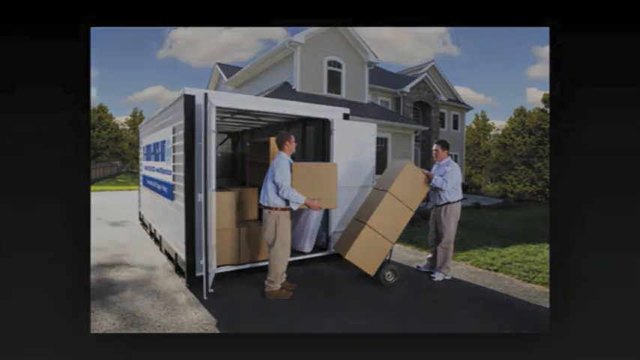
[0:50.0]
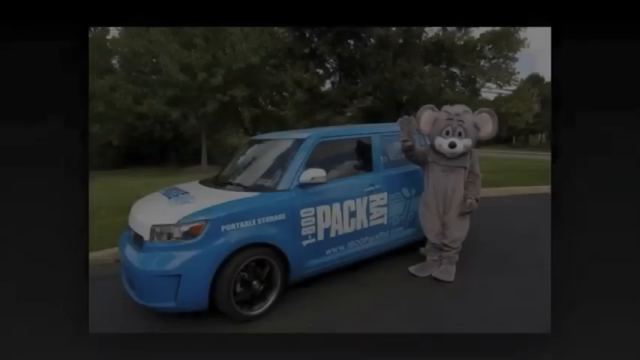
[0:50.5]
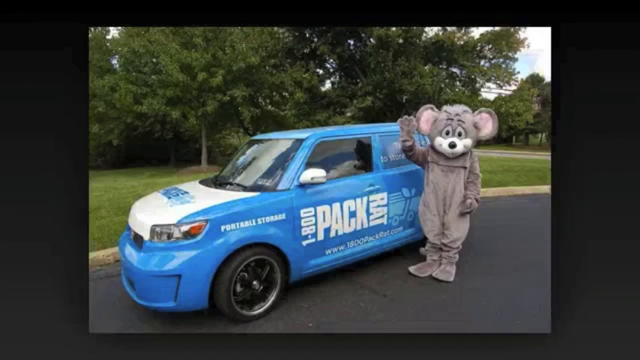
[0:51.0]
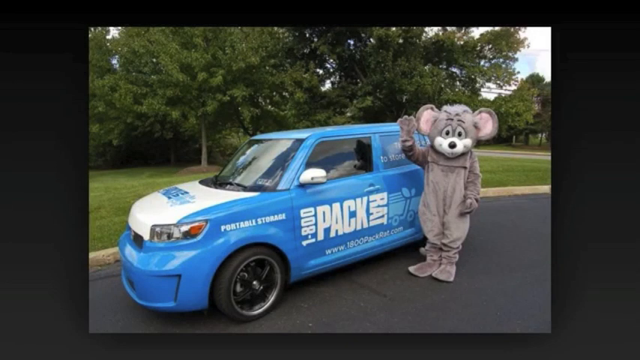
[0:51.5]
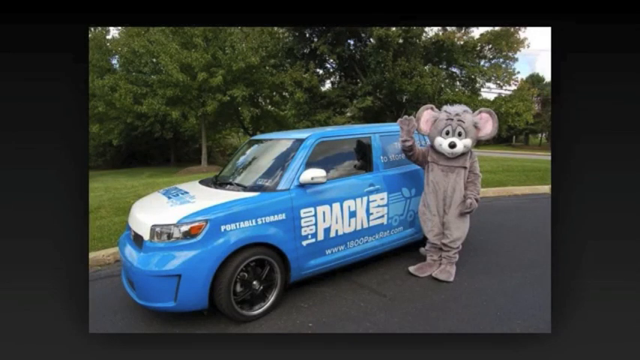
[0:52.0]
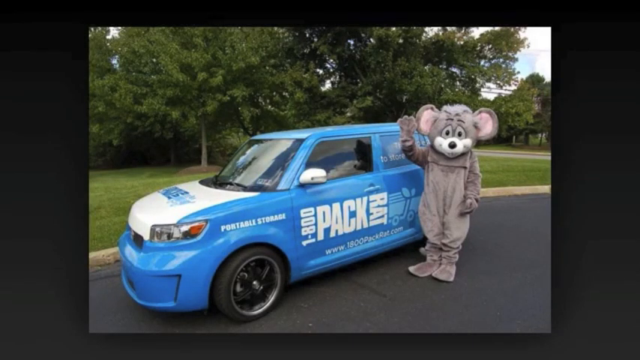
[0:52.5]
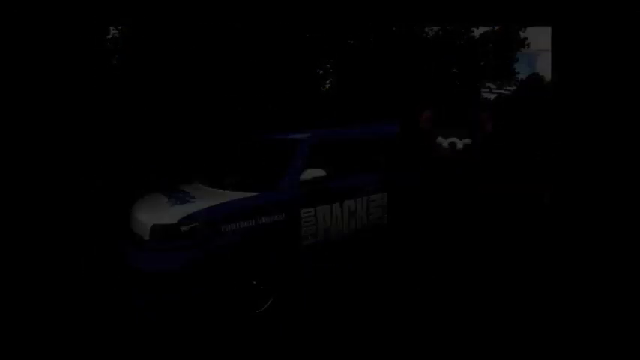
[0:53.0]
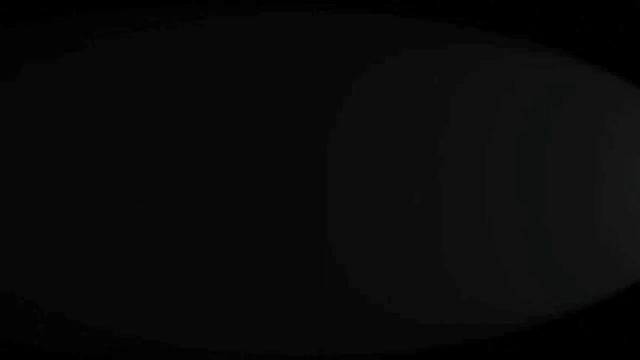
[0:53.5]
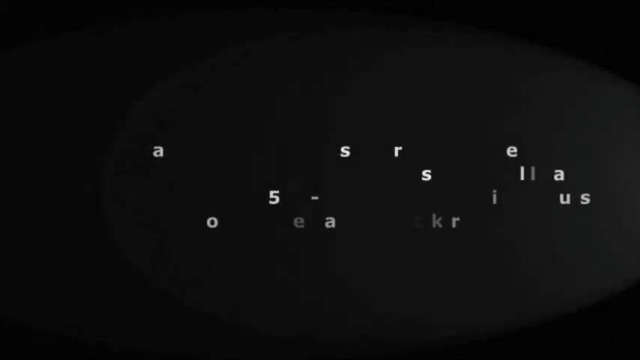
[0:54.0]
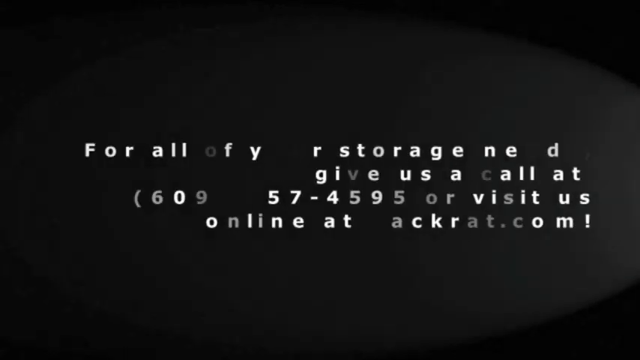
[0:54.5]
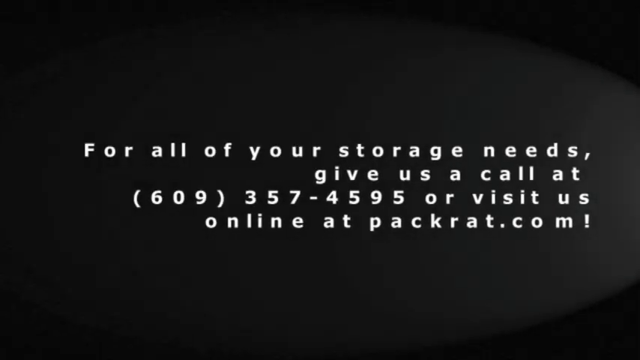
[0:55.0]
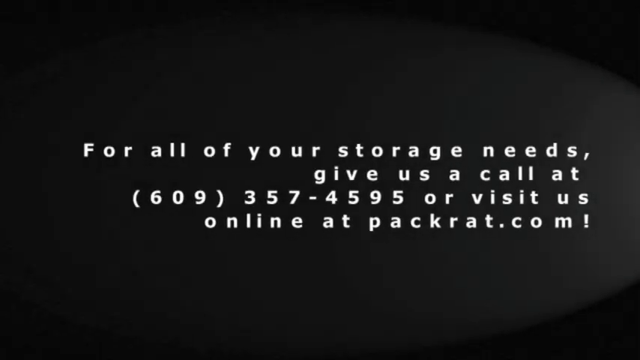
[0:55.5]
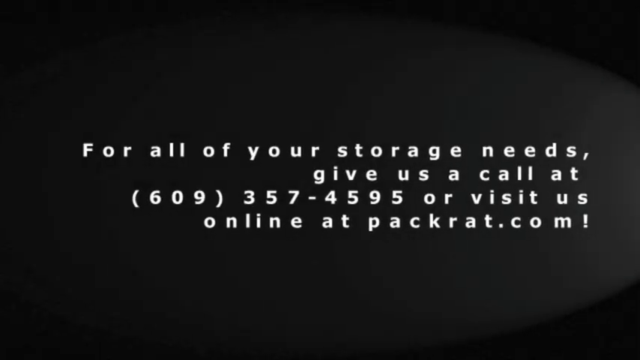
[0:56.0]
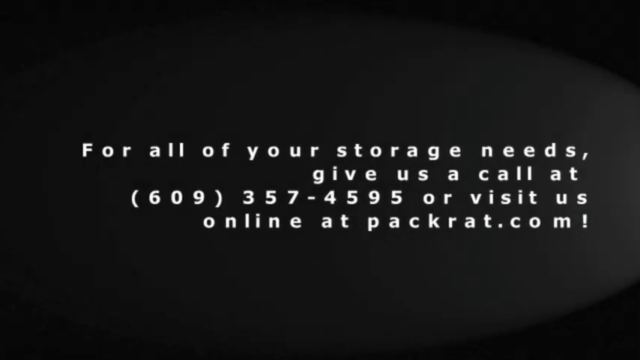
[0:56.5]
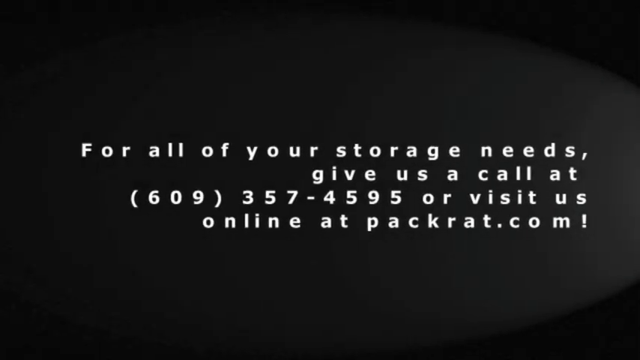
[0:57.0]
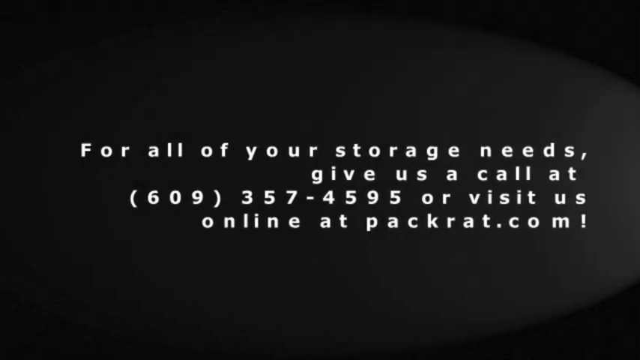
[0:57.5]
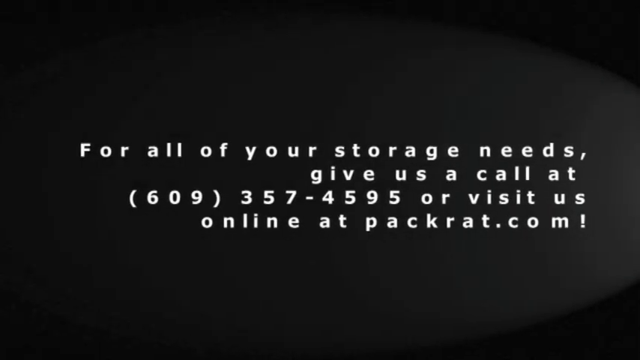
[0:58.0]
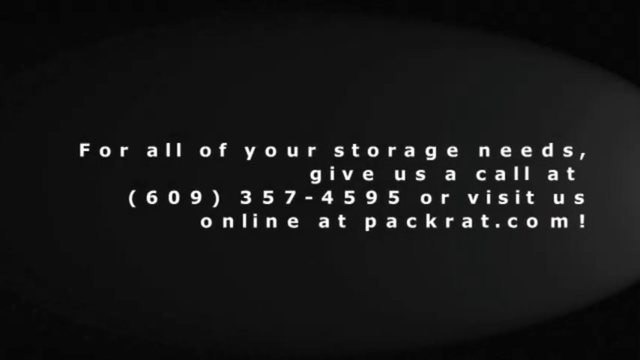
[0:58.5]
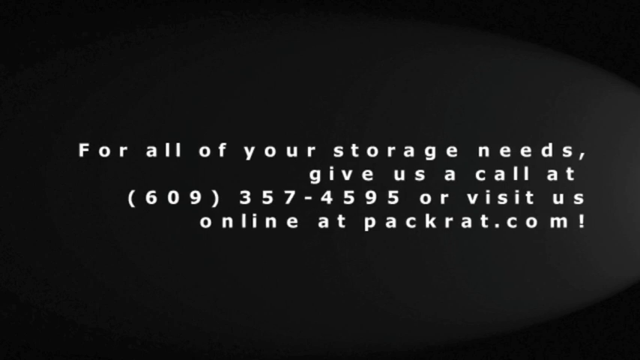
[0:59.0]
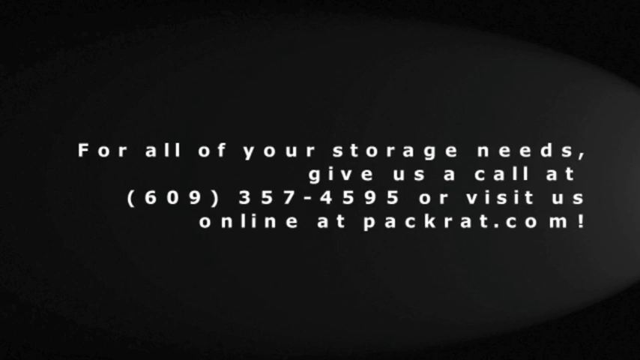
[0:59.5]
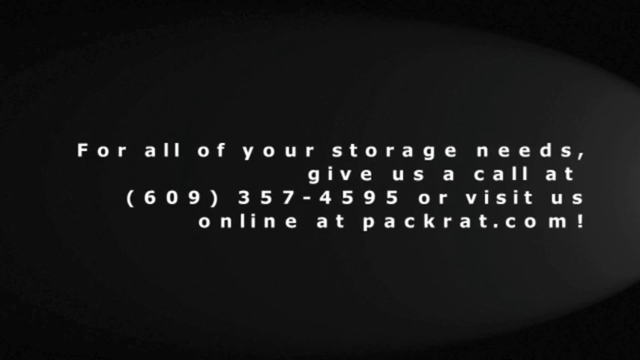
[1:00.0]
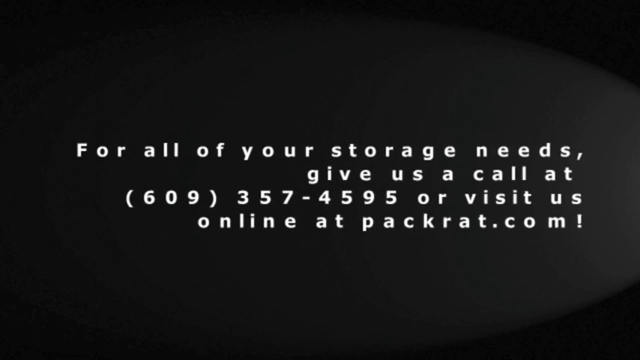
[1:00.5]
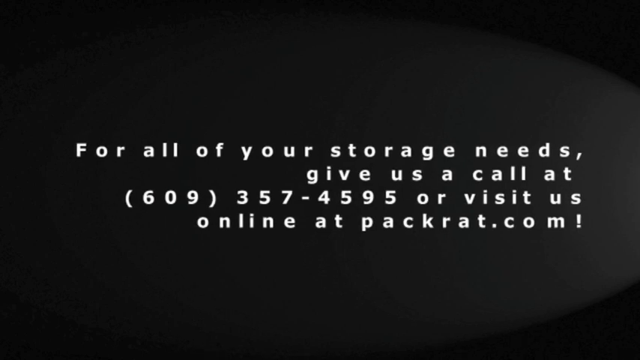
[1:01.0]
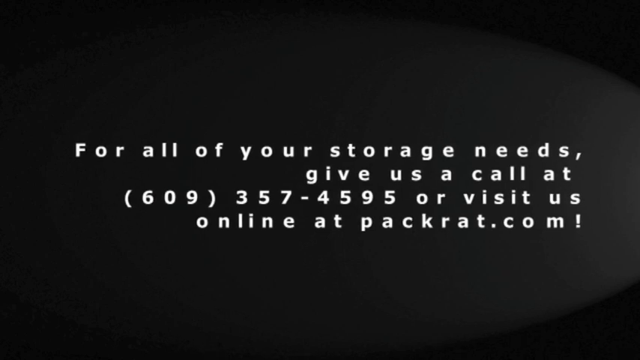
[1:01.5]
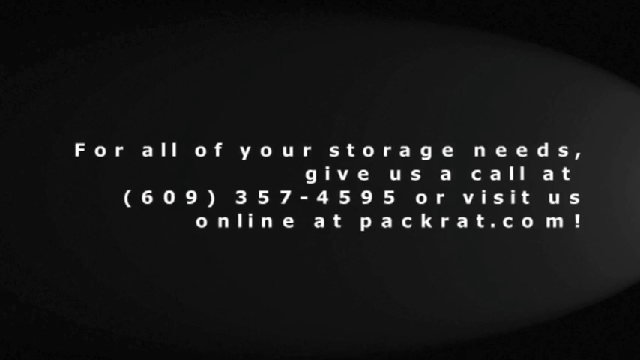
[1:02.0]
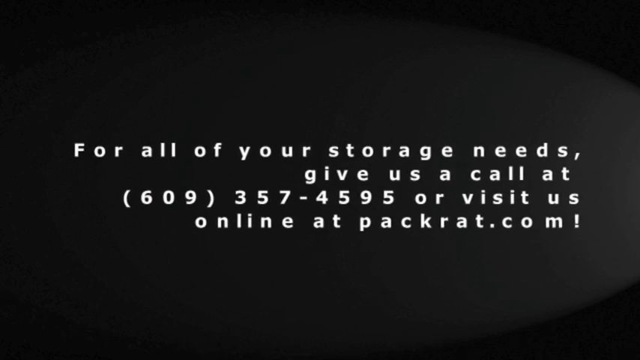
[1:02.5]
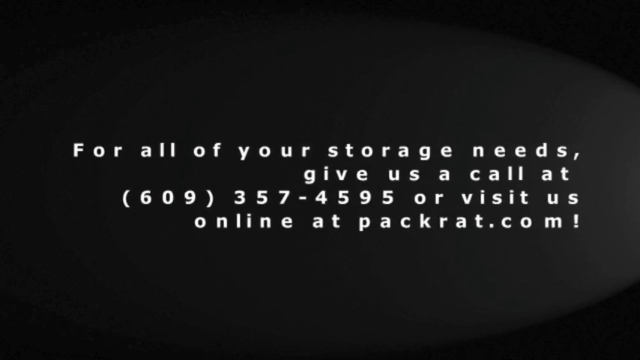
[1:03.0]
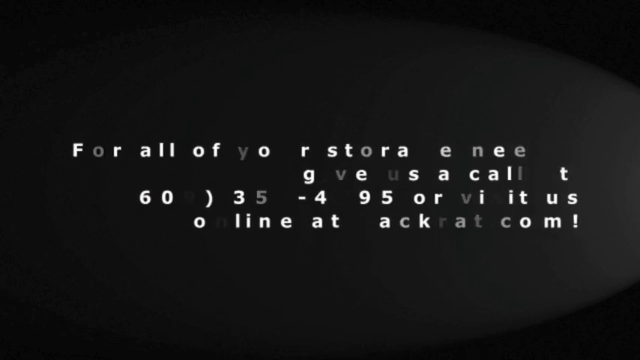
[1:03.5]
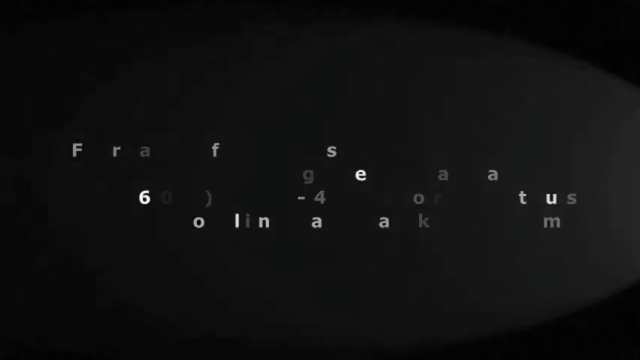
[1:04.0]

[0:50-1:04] The shipping cargo is dropped off at the site, and boxes are loaded into the container. The scene transitions to a small truck, like a car, that says "1-800-PACK-RAT" and "portable storage" on it. A mascot, a rat, waves, and a message reads "for all of your storage needs, give us a call at 609-357-4595, or visit us online at packrat.com!"